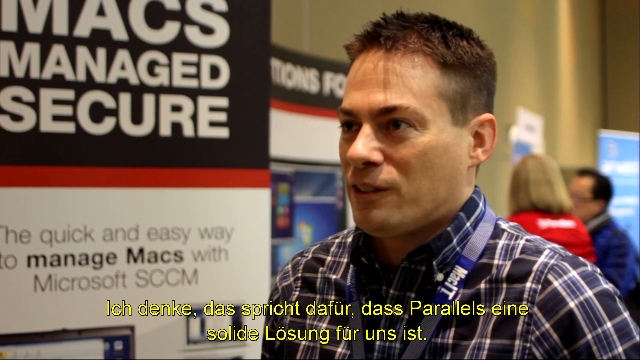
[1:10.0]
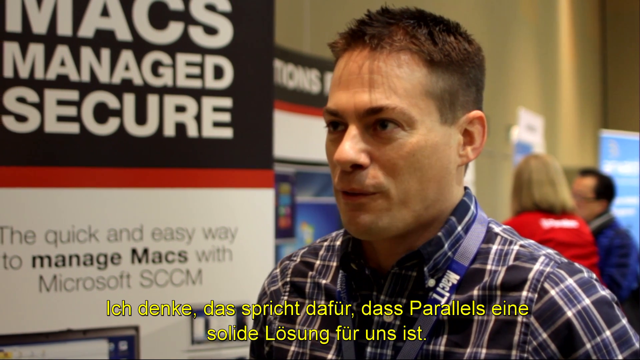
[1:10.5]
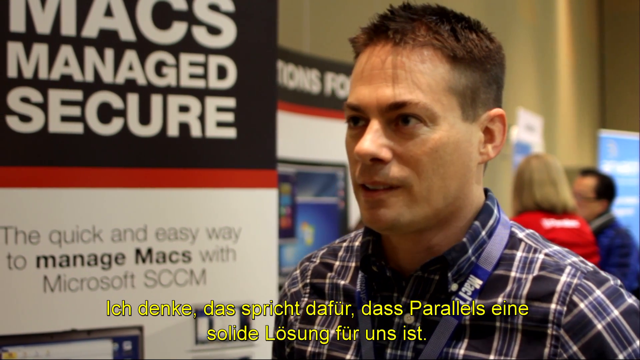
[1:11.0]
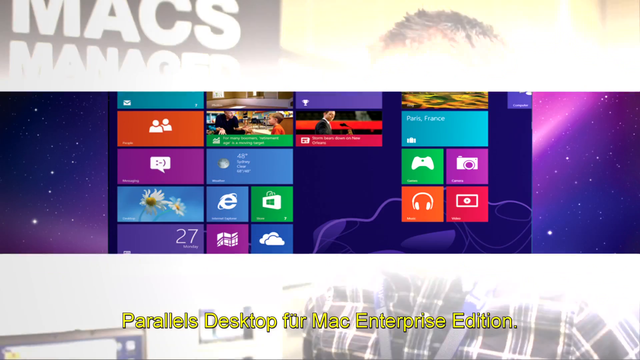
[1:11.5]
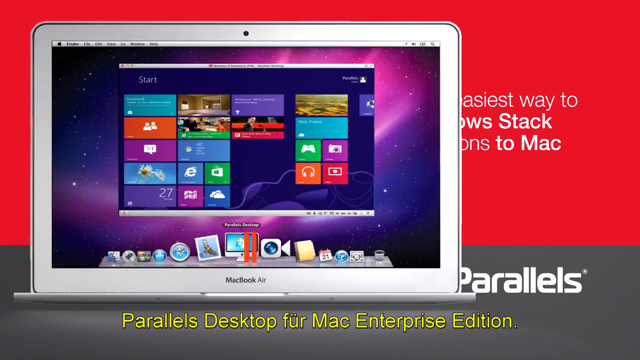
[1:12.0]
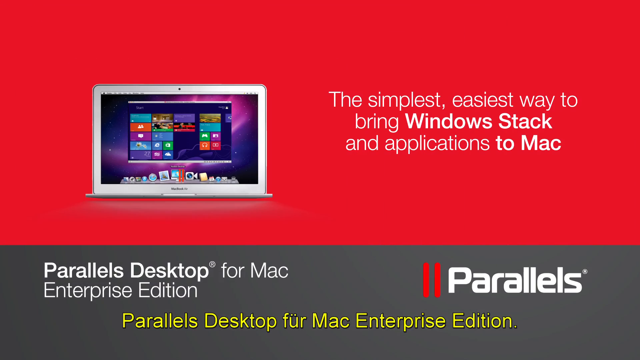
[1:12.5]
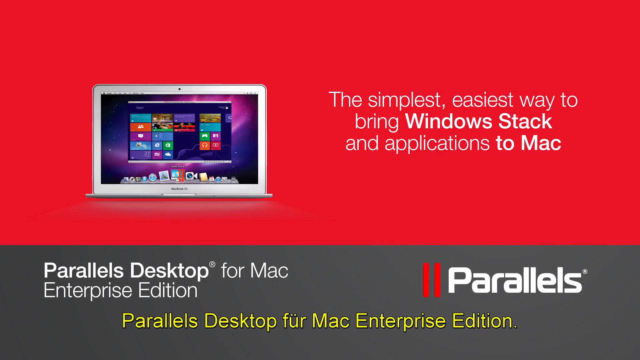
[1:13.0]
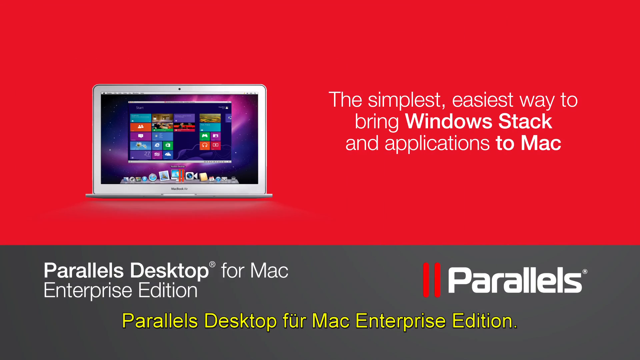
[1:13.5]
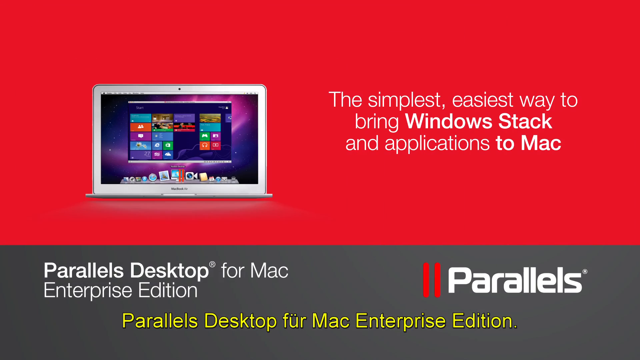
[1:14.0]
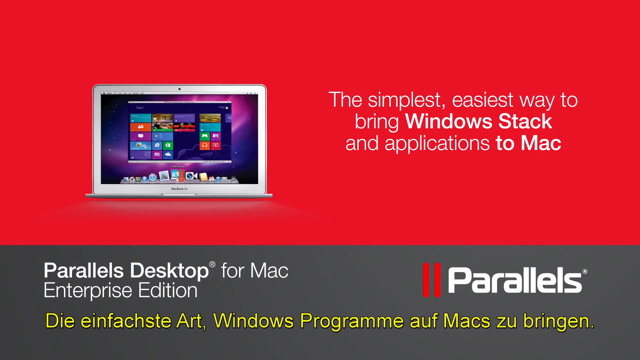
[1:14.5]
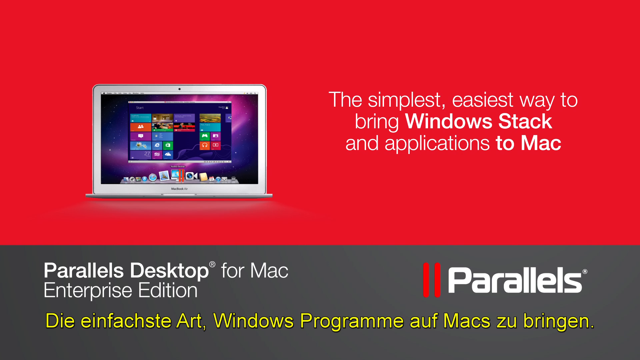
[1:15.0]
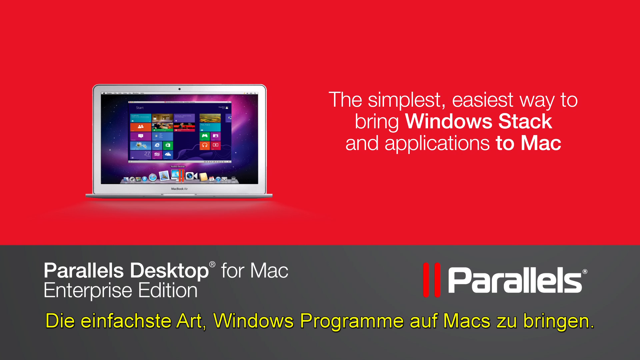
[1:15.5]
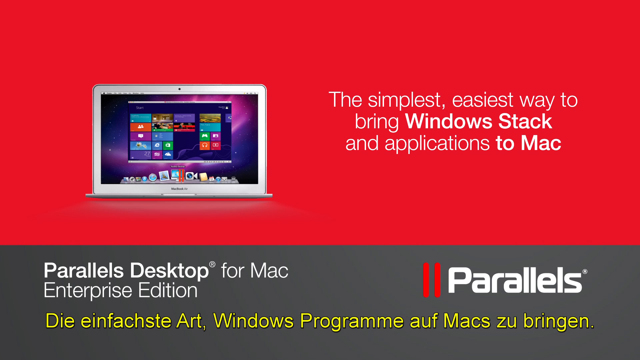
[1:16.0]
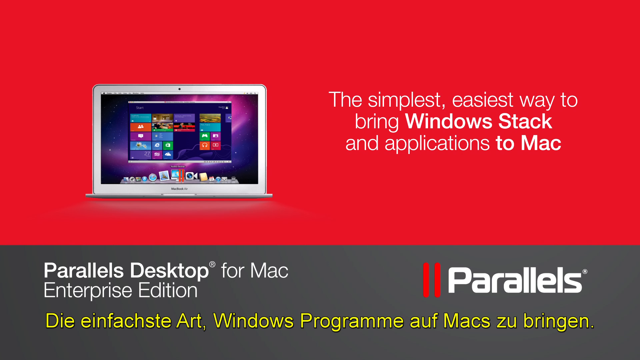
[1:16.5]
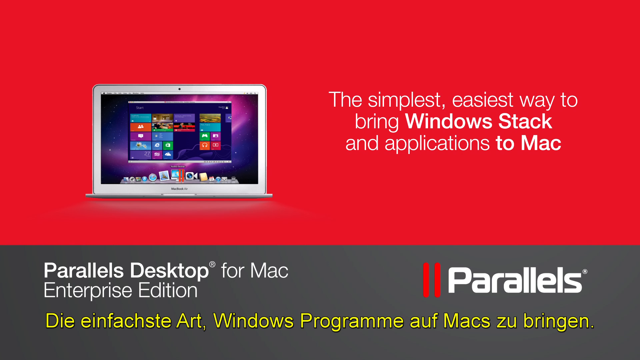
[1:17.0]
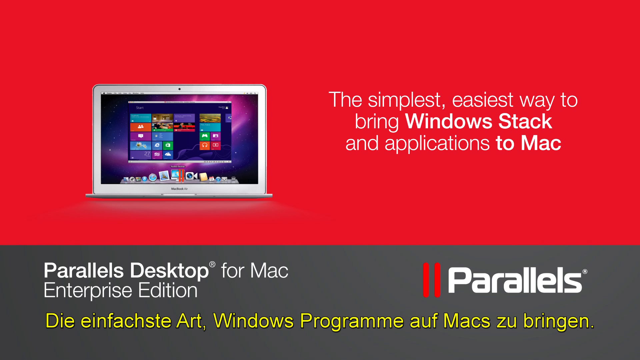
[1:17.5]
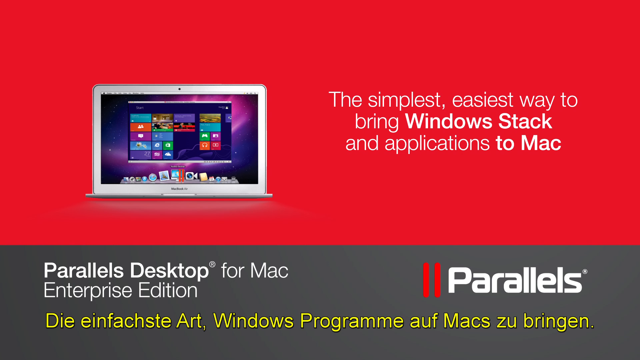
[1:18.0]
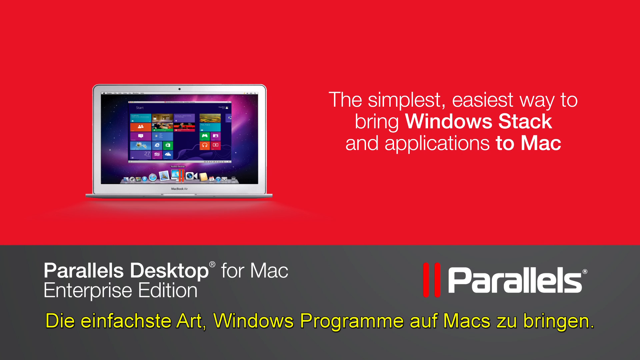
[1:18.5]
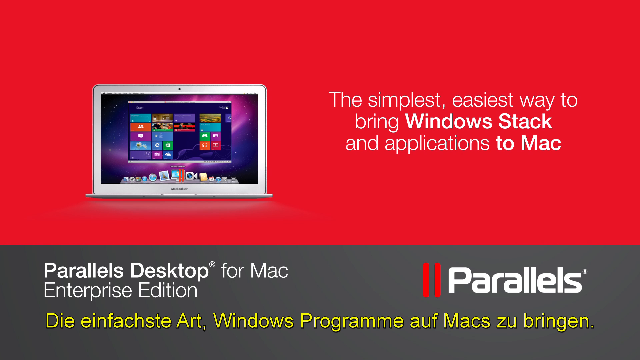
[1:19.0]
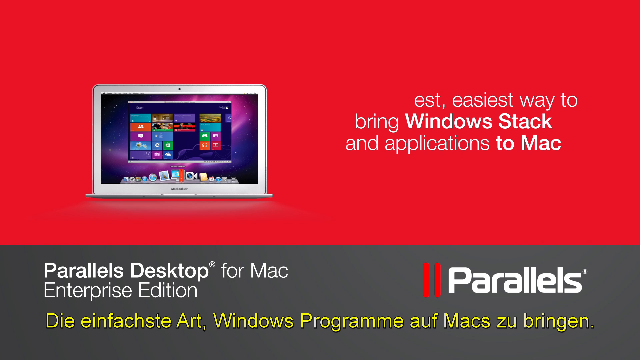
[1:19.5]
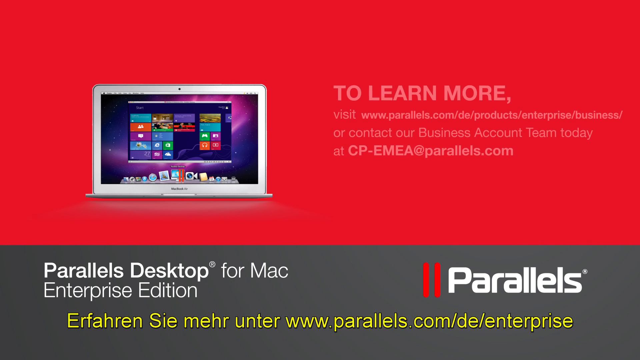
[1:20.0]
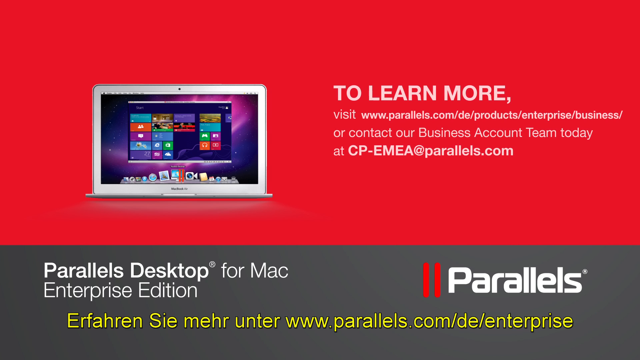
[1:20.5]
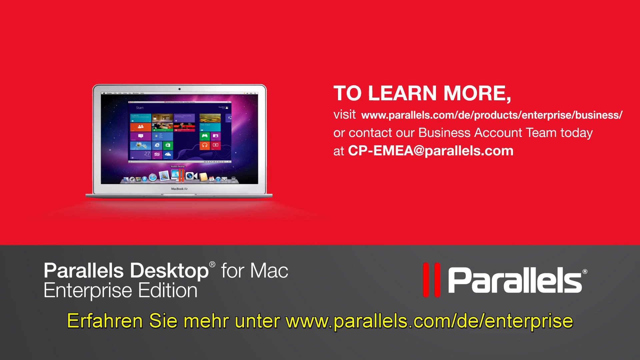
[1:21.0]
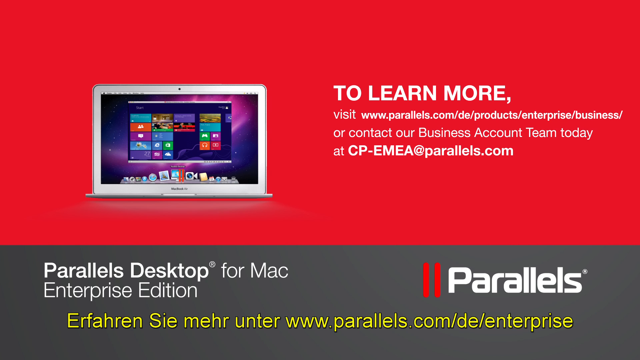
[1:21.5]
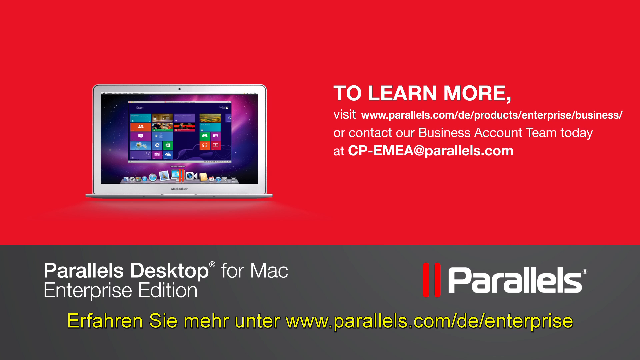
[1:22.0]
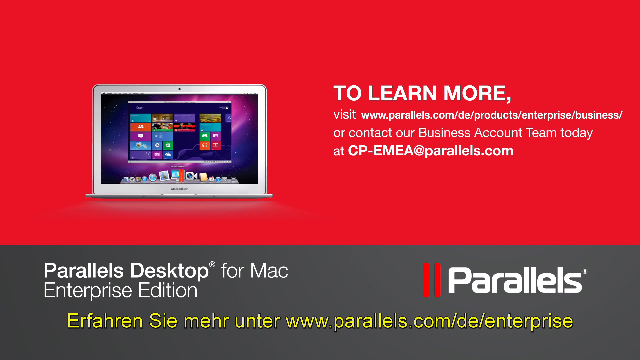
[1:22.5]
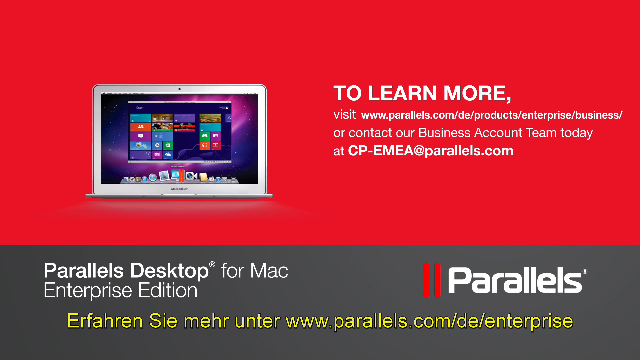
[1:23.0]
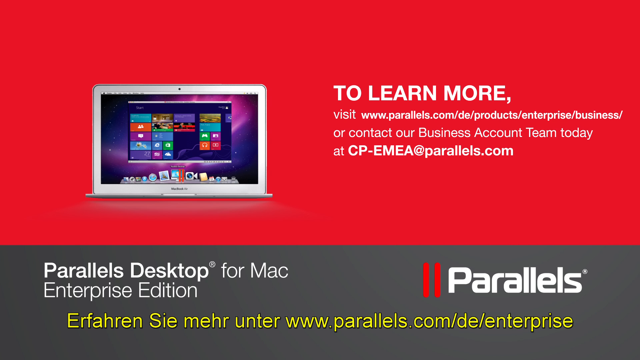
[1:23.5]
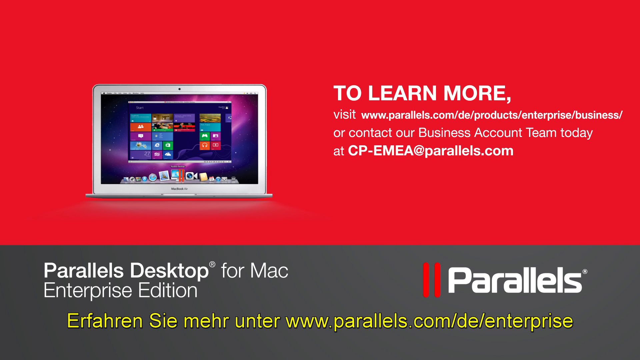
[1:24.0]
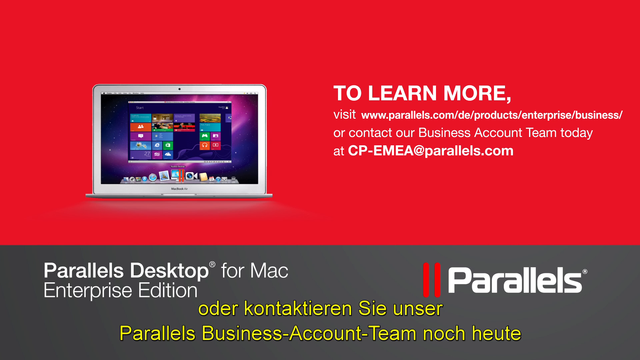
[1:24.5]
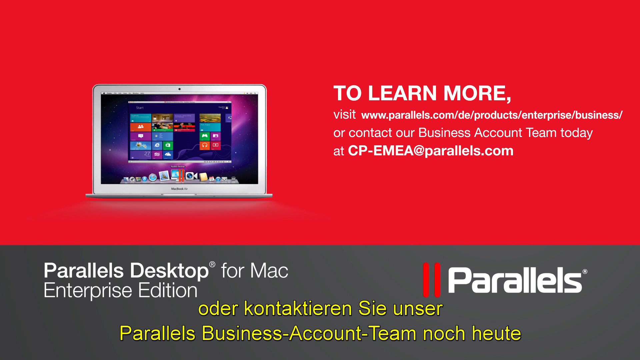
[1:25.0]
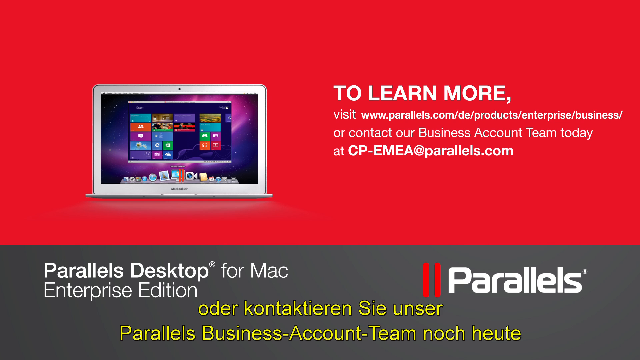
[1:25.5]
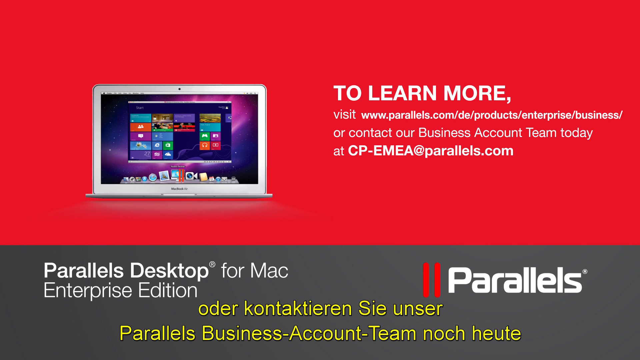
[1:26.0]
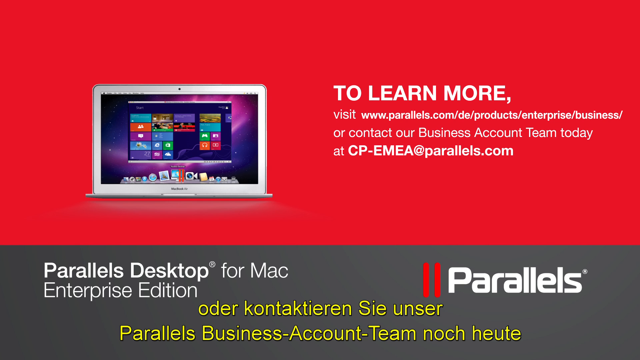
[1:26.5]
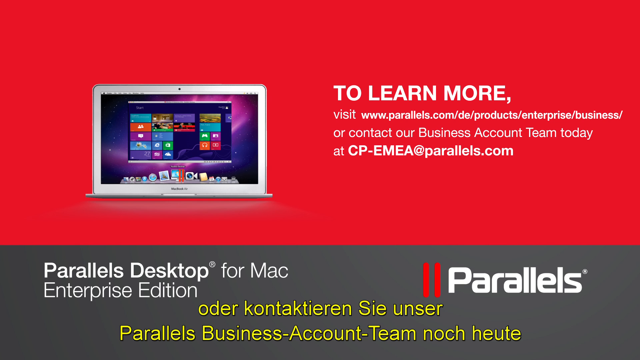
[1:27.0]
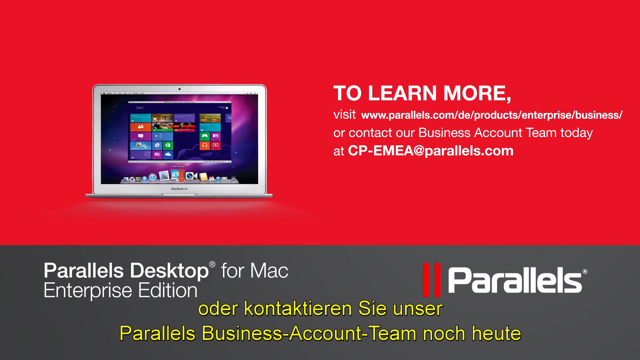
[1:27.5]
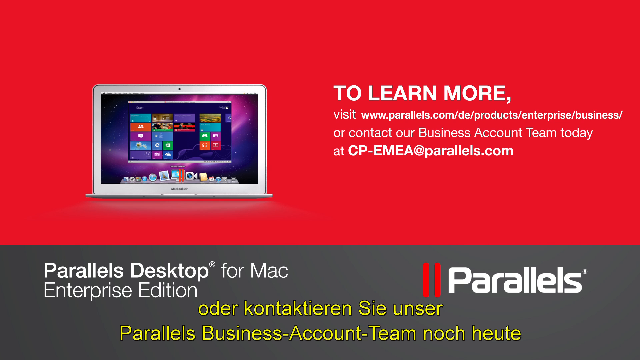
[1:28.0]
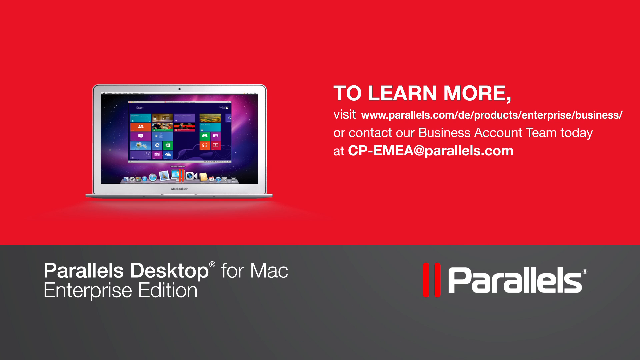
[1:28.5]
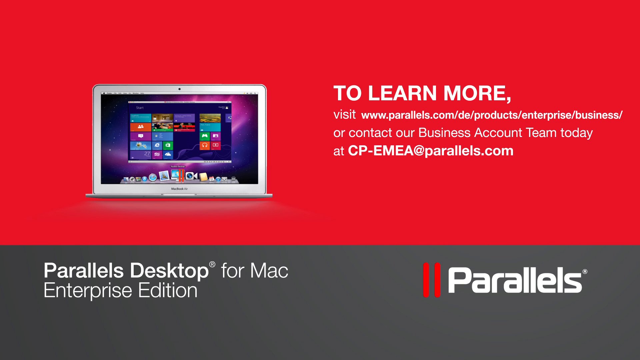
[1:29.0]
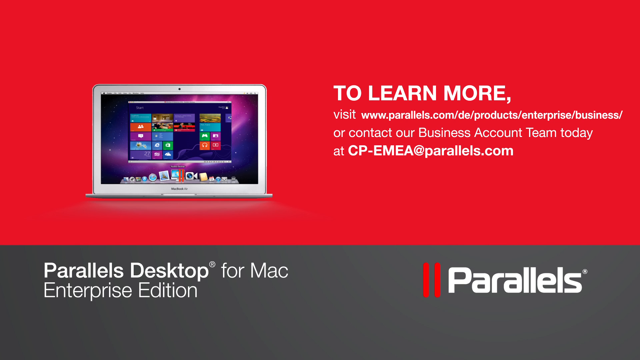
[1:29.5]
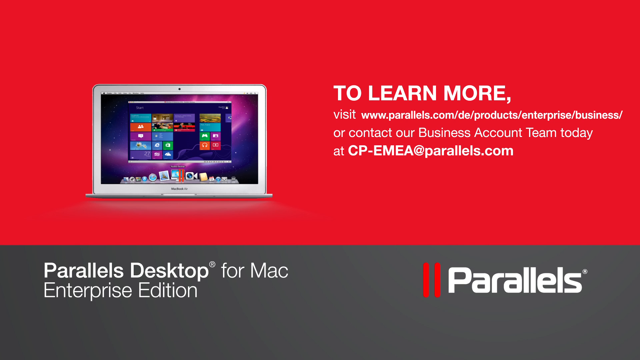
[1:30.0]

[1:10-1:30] The man speaks briefly, with German text underneath, and the video fades to a Parallels Desktop for Mac Enterprise Edition screen. The top bar takes up three-quarters of the screen and is red in the background, showing a Mac screen with the text "the simplest easiest way to bring Windows stack and applications to Mac" and Parallels Desktop for Mac Enterprise Edition. Underneath is German, presumably a translation. The Parallels logo appears as two red lines with white "parallels" and a dark band at the bottom. A link reads "www.parallels.com/DE products", and German translation runs underneath the whole thing. Contact information at the top right includes the email address "CP EMEA at parallels.com".